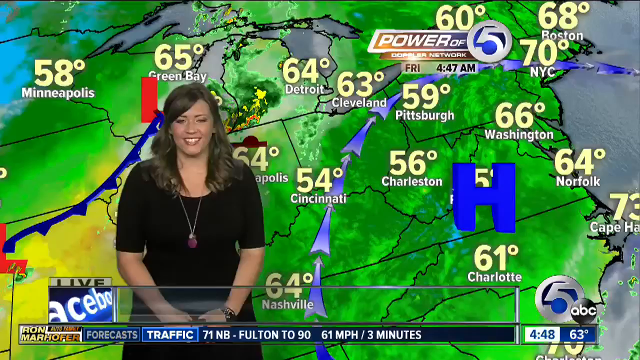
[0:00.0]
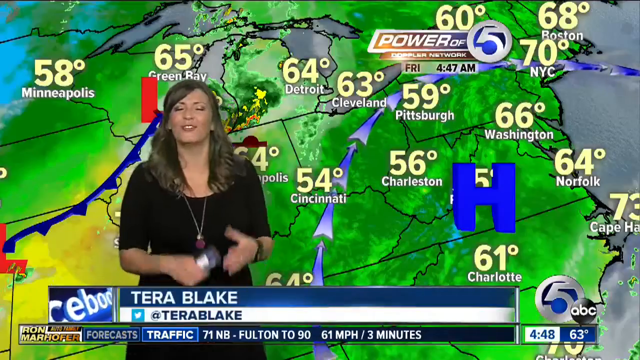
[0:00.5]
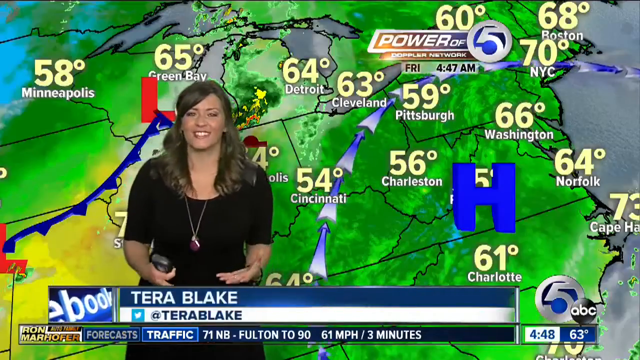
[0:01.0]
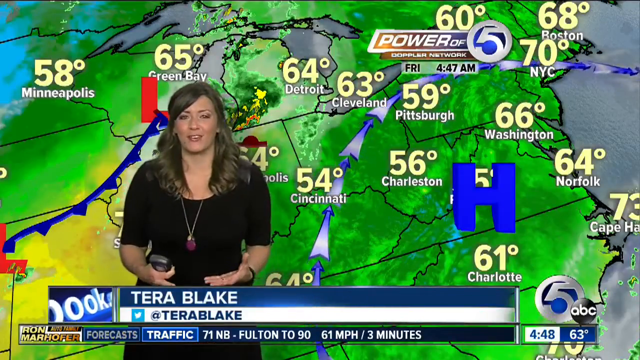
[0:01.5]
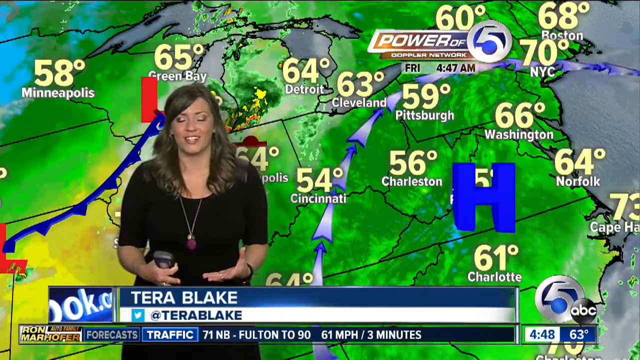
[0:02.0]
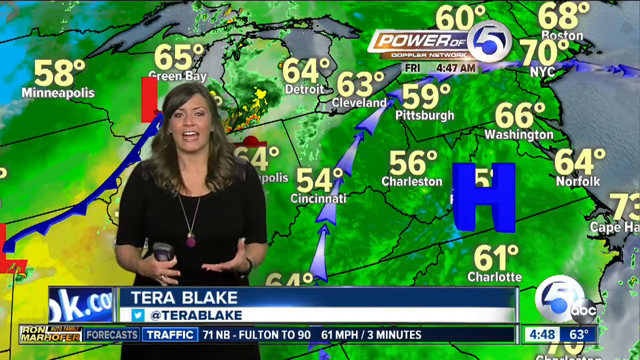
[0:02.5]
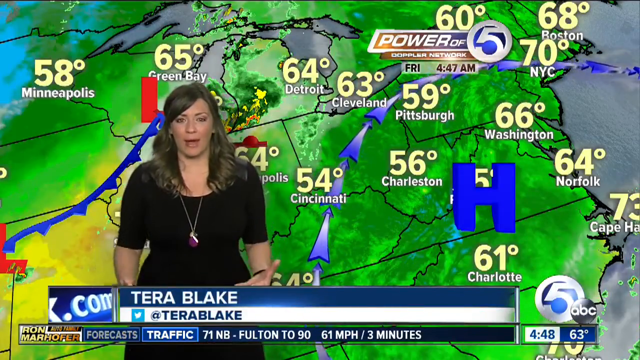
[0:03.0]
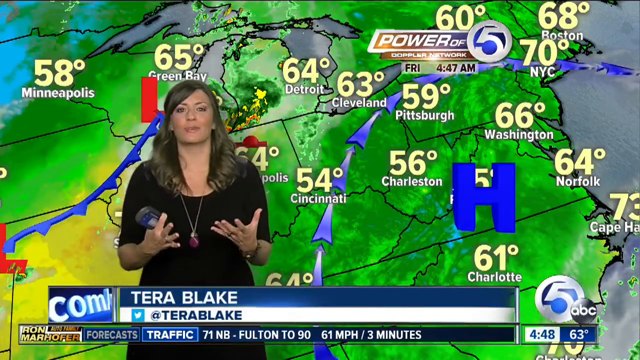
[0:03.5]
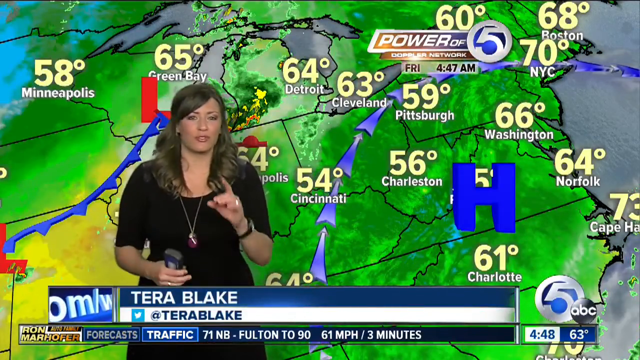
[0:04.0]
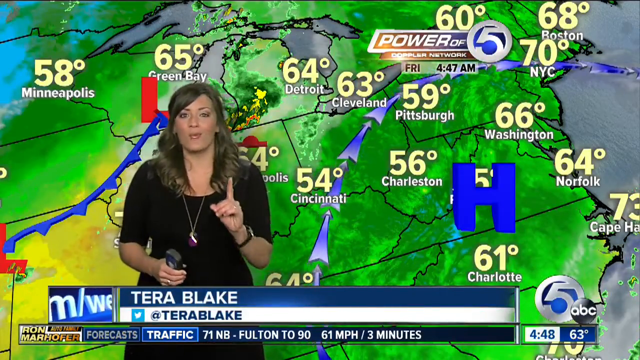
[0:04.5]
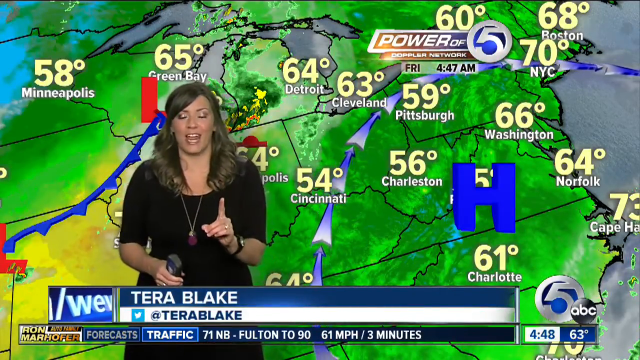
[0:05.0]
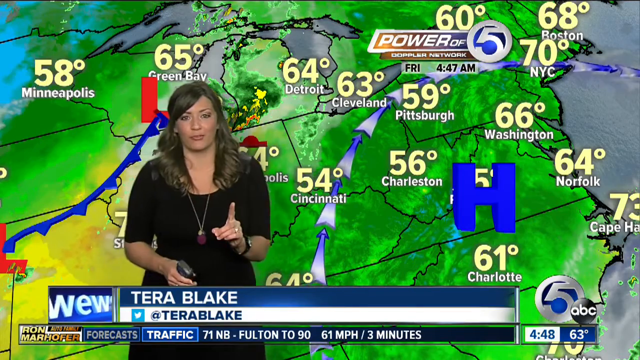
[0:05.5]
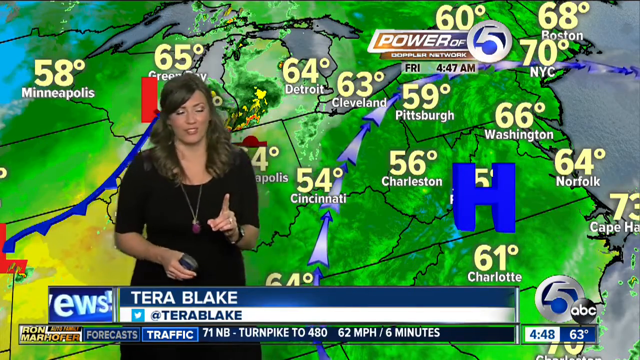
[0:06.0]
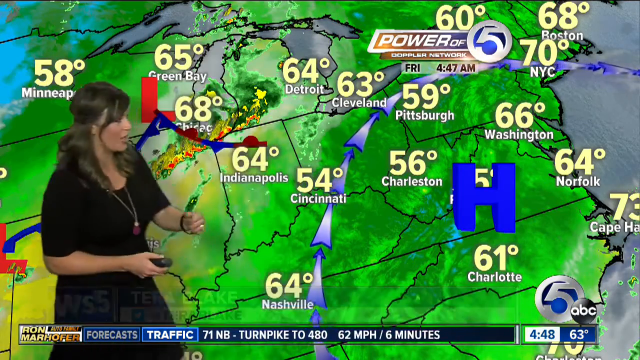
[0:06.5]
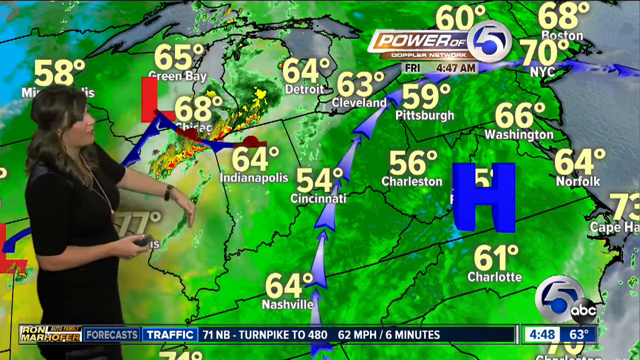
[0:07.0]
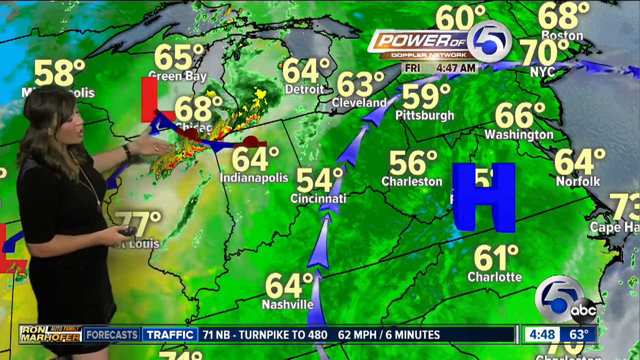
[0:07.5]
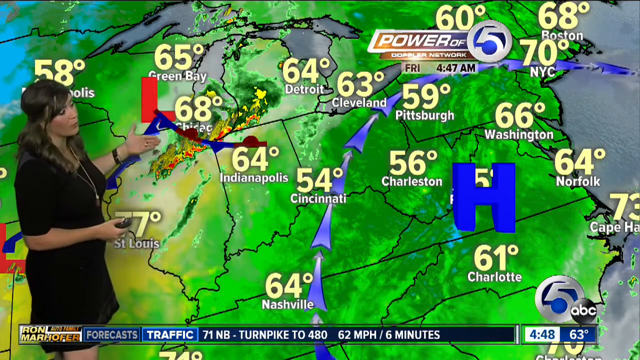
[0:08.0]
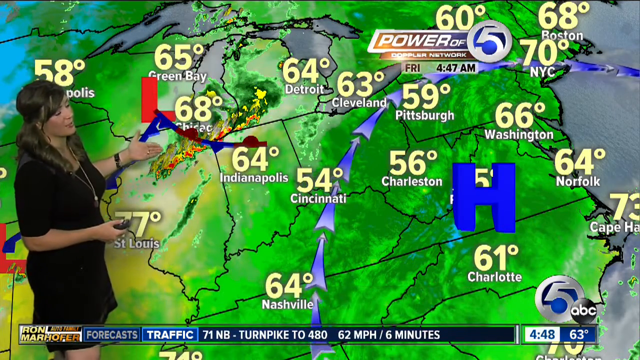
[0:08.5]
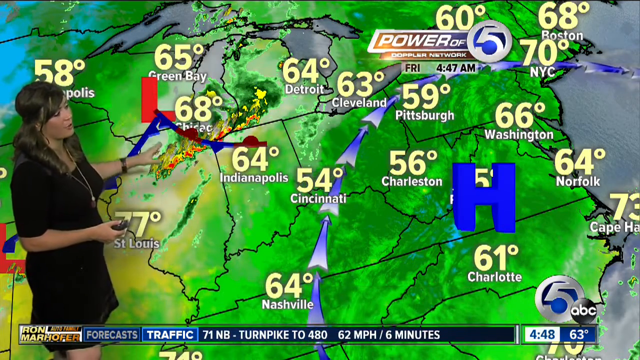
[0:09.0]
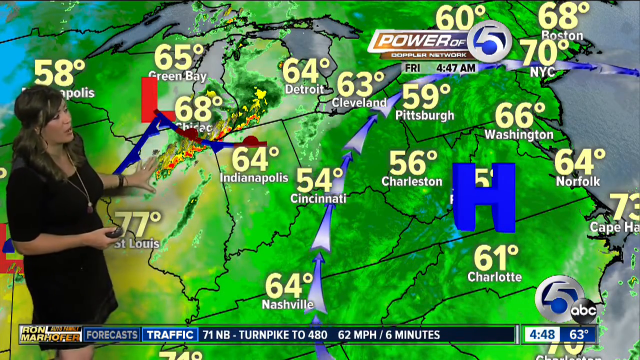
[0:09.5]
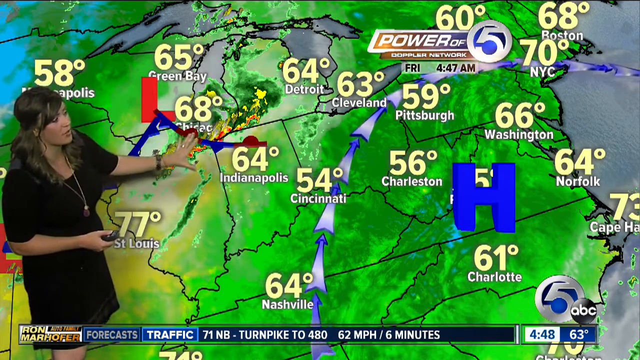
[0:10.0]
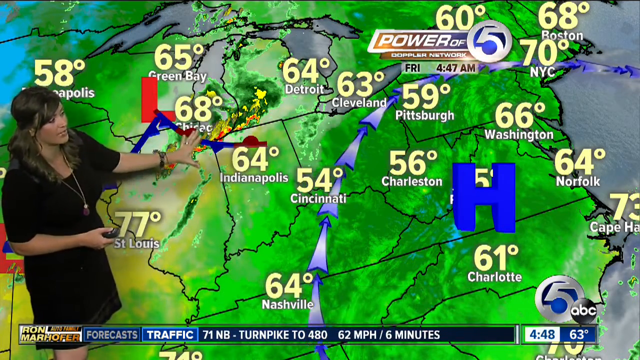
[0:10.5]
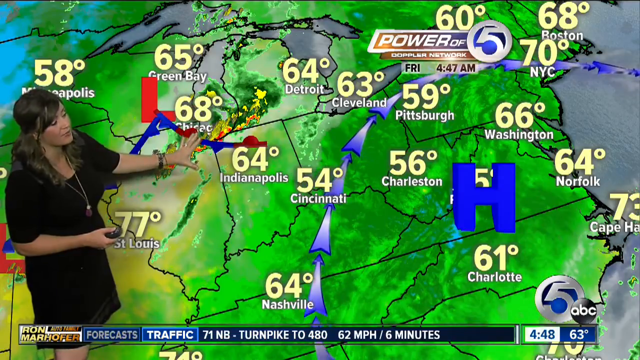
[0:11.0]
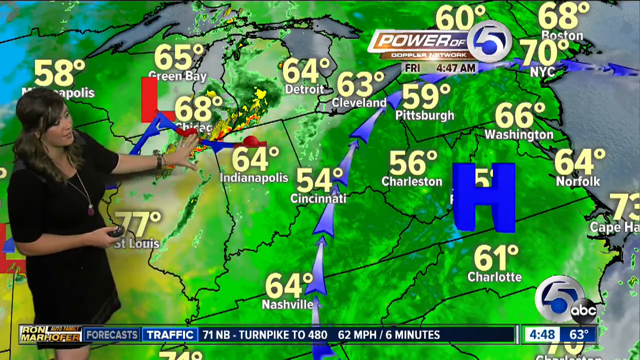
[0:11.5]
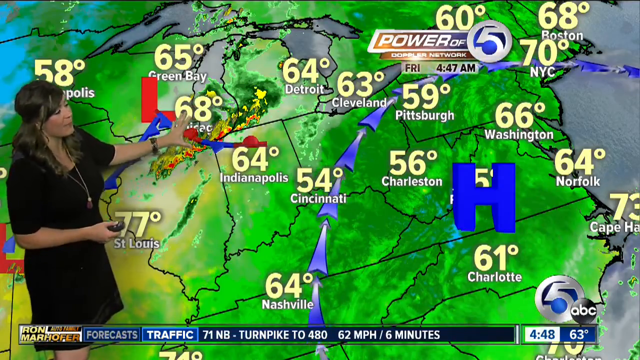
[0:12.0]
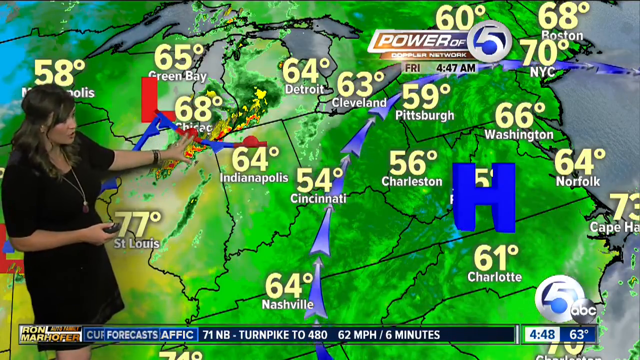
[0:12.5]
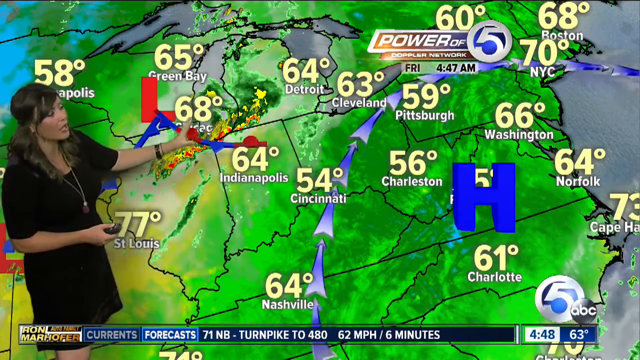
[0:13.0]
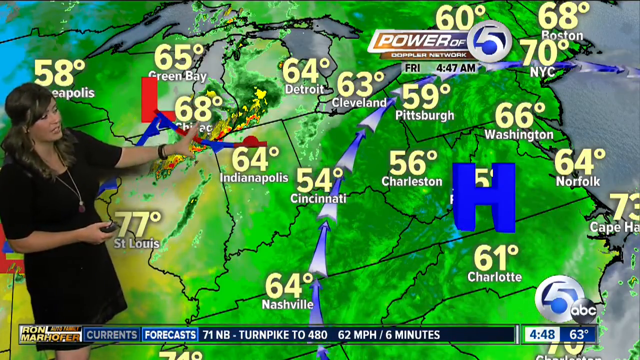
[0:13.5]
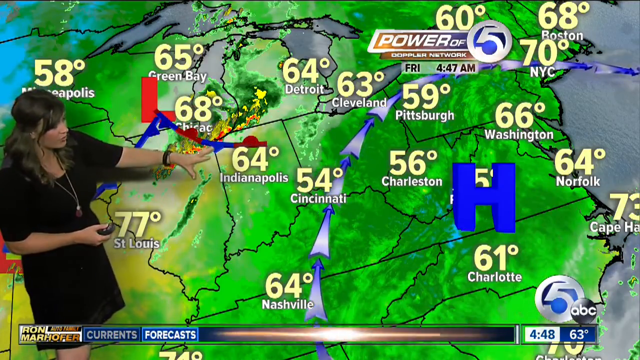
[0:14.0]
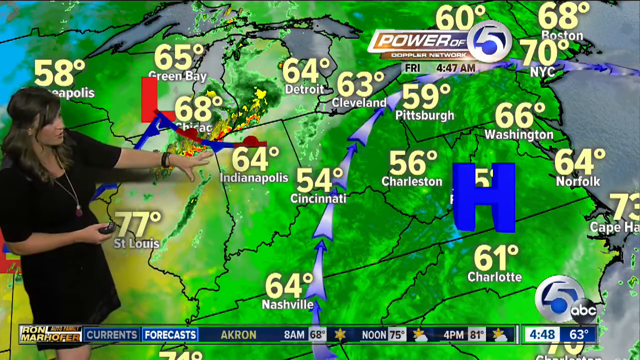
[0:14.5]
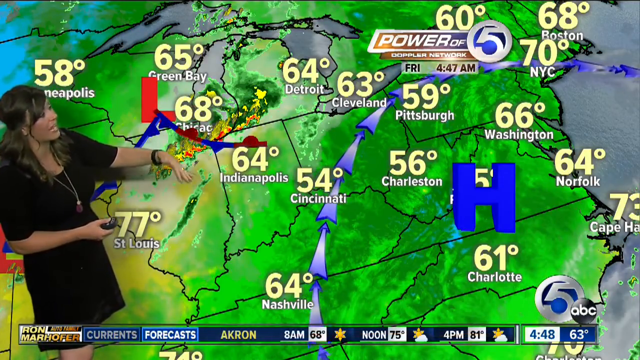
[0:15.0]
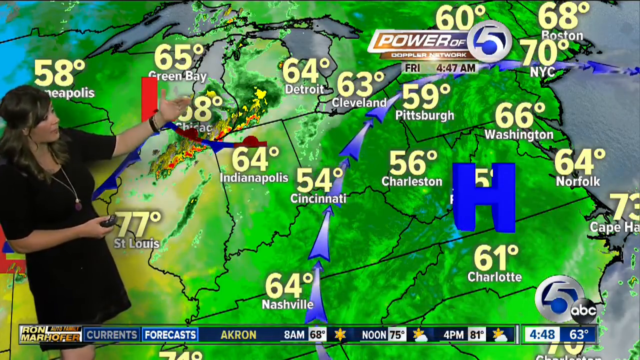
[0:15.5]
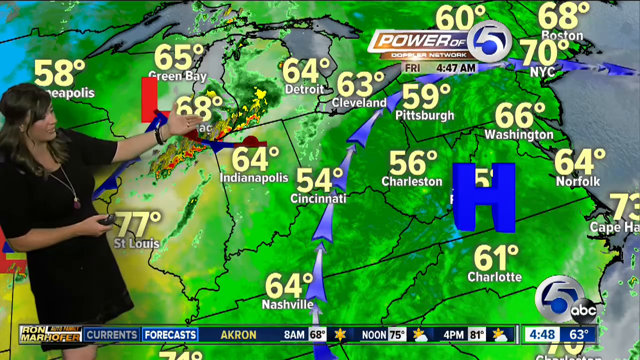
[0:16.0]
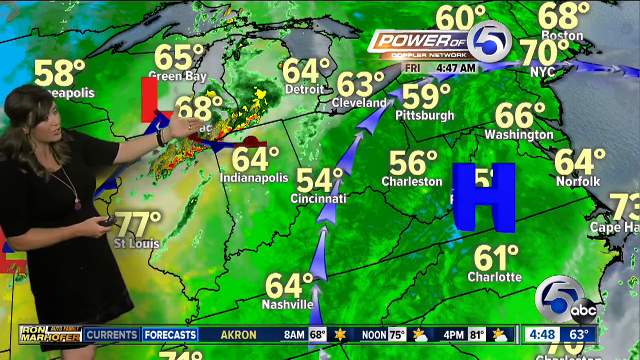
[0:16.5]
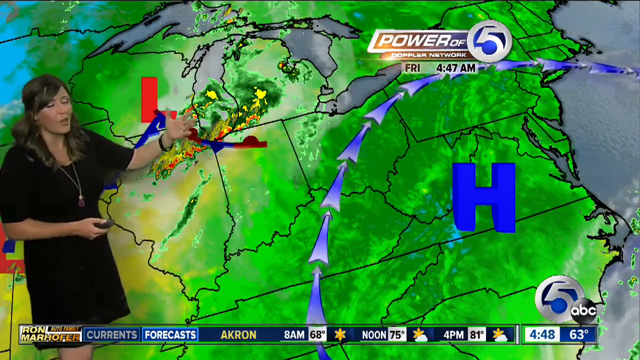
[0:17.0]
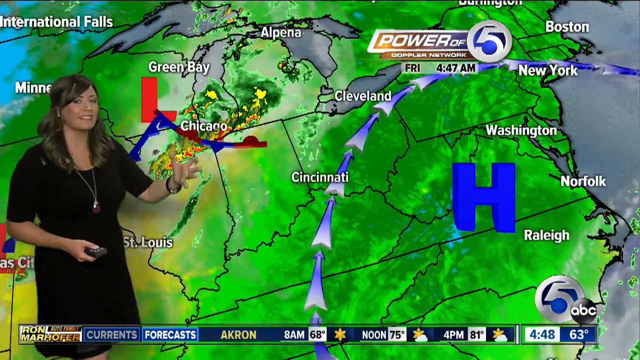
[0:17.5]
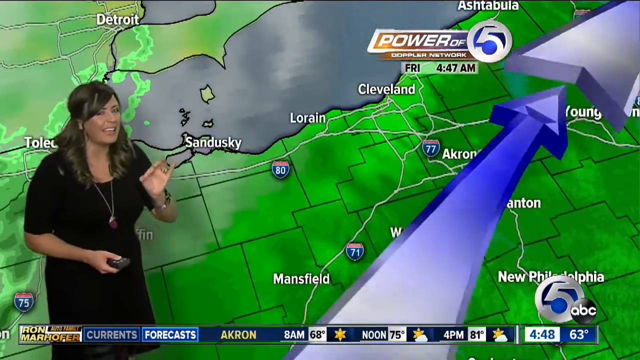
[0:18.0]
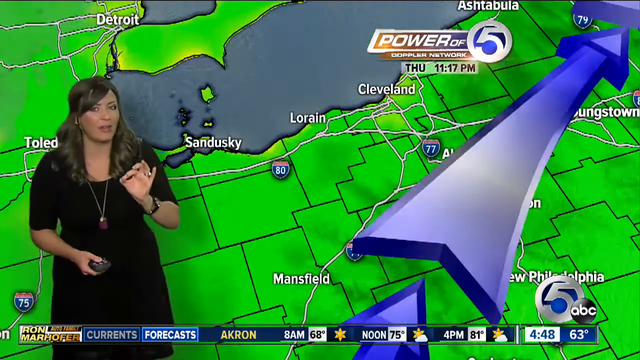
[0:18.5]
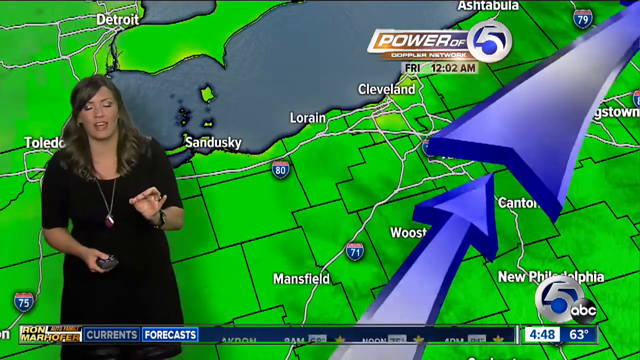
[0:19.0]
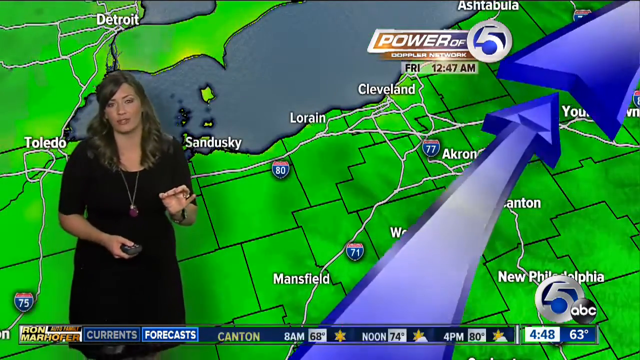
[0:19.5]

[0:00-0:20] The video opens on a weather report with a weather presenter standing in front of a background map of the United States showing green cloud movements and a purple line showing airflow. Red L's and blue H's are on the map, and temperatures are zoomed in around Green Bay, Minneapolis, Detroit, Cleveland, Cincinnati, Charlotte and Nashville, on the east coast. The young woman has long brown hair about four inches past her shoulders that rolls outward, away from her, on both sides. She wears a long black dress. Her name is Terry Blake, and an email address with "terryblake" appears at the bottom. As she talks, an arrow of high pressure movement moves on the right side, and she points toward Minneapolis and Detroit.